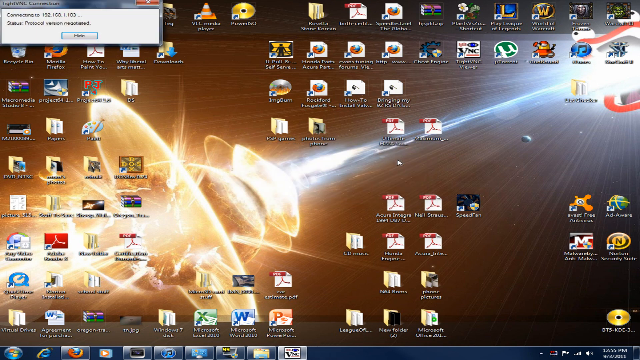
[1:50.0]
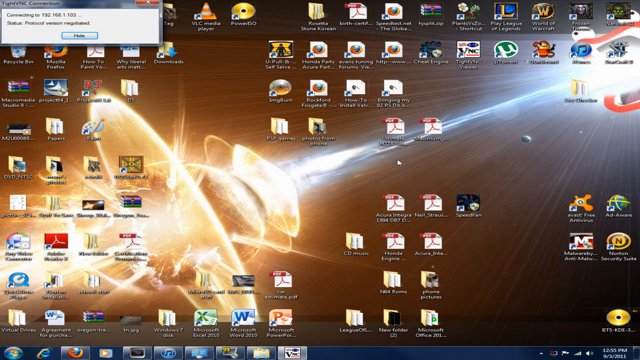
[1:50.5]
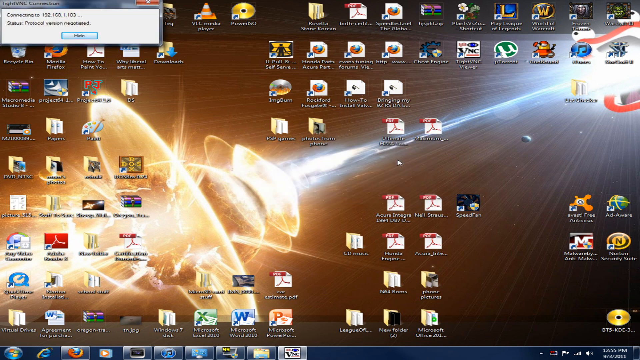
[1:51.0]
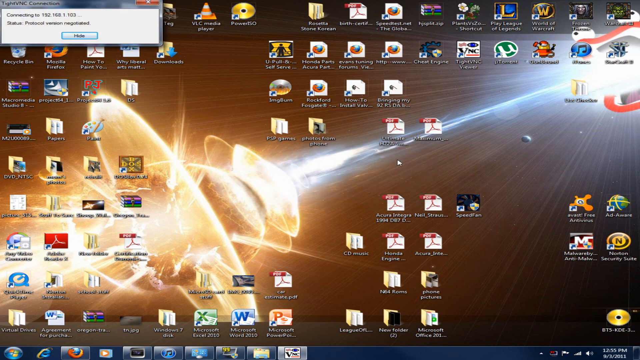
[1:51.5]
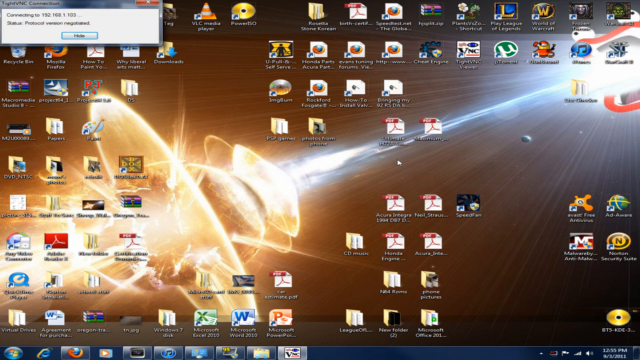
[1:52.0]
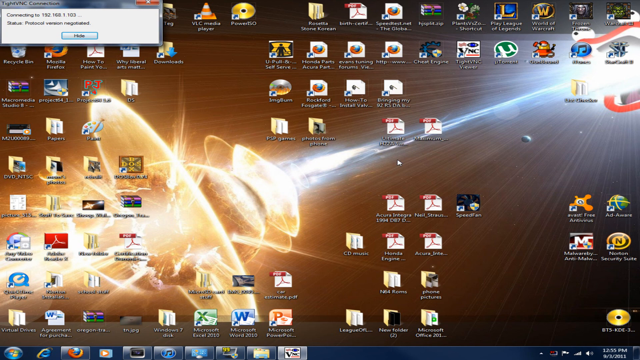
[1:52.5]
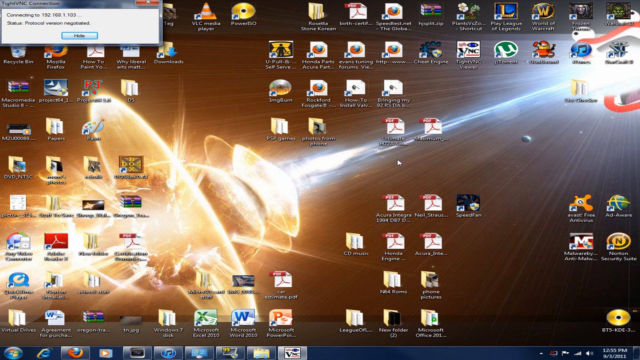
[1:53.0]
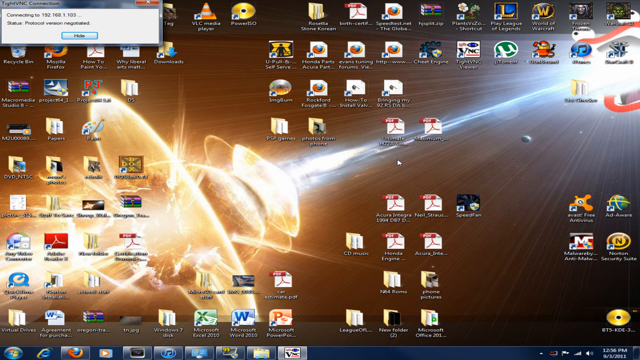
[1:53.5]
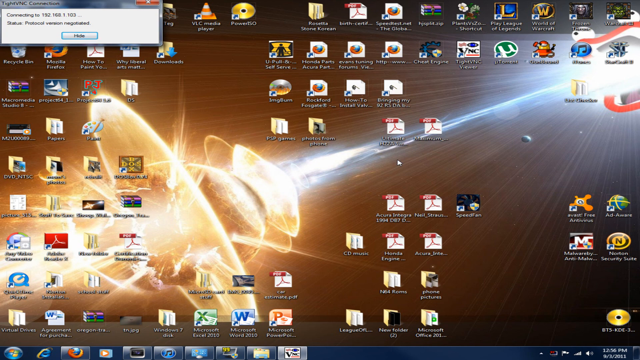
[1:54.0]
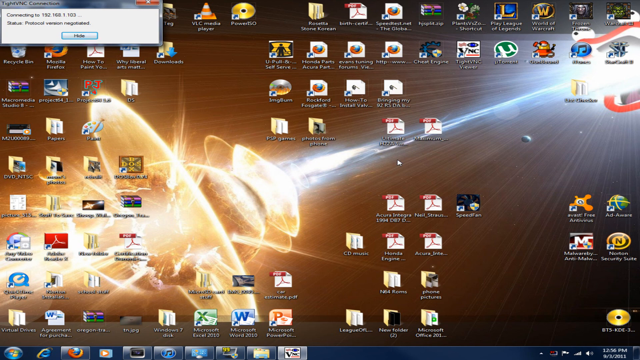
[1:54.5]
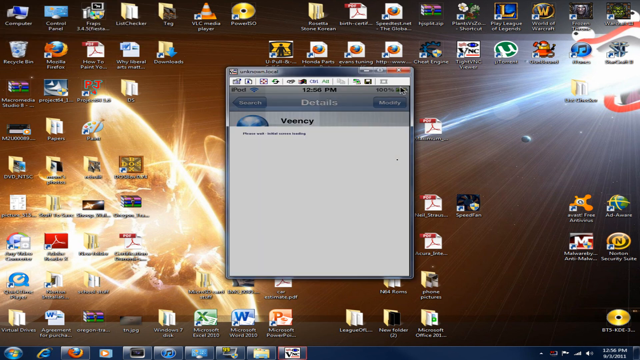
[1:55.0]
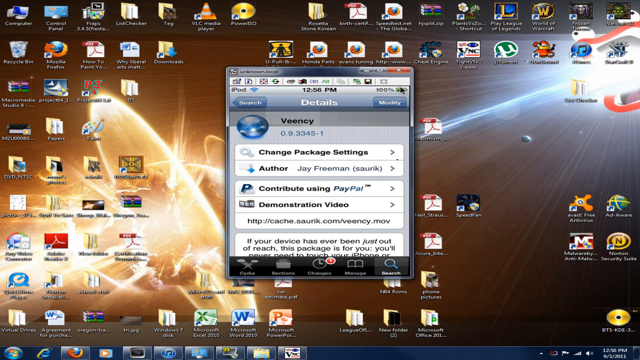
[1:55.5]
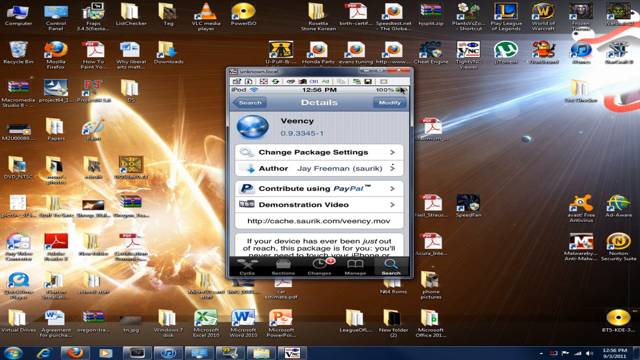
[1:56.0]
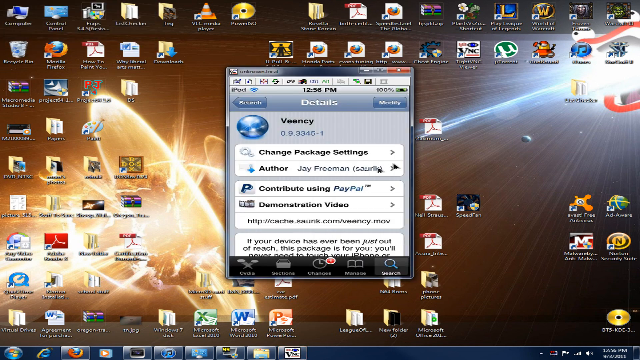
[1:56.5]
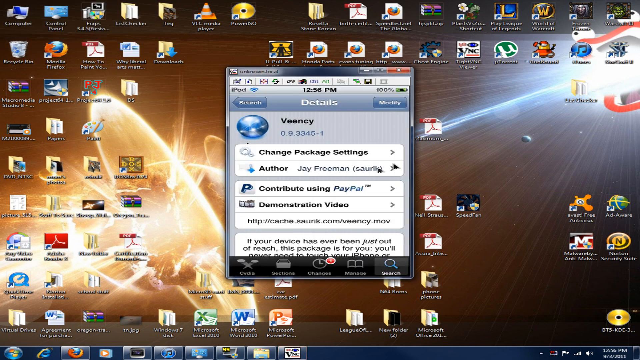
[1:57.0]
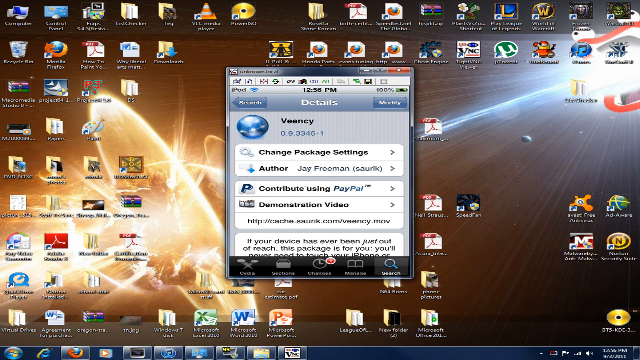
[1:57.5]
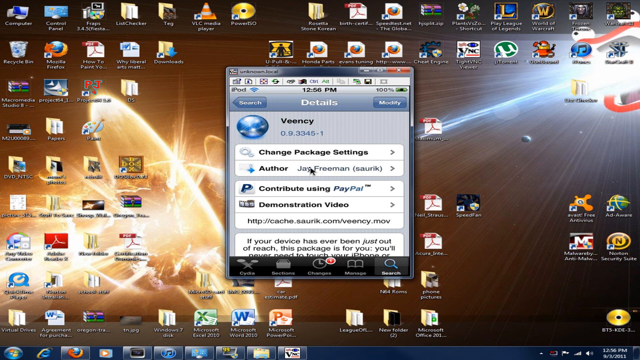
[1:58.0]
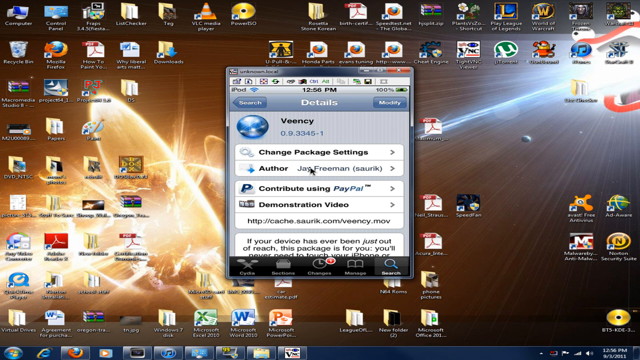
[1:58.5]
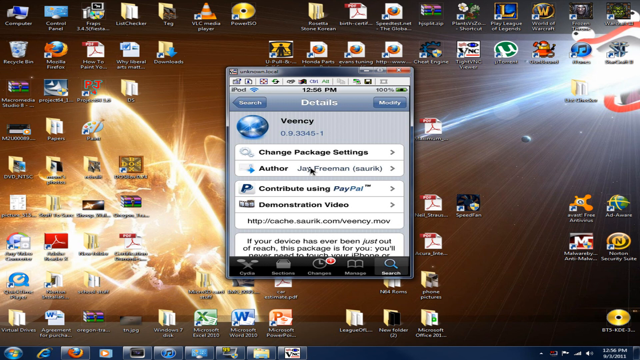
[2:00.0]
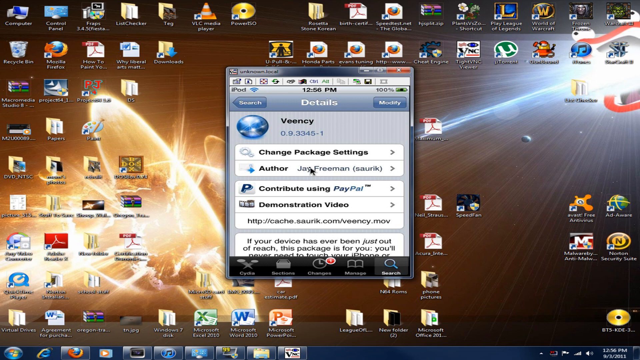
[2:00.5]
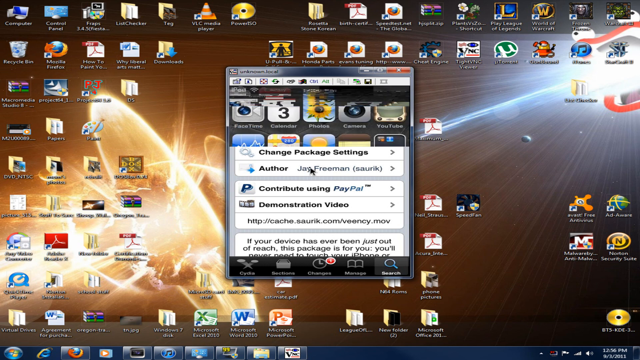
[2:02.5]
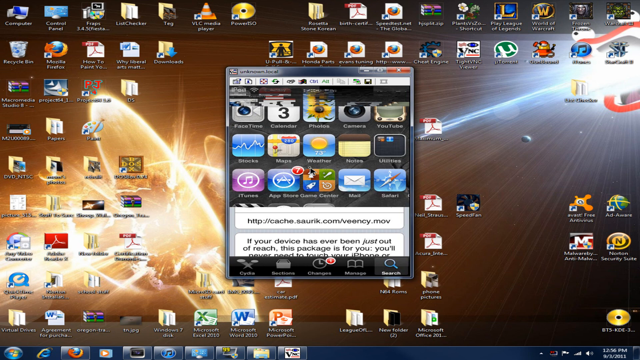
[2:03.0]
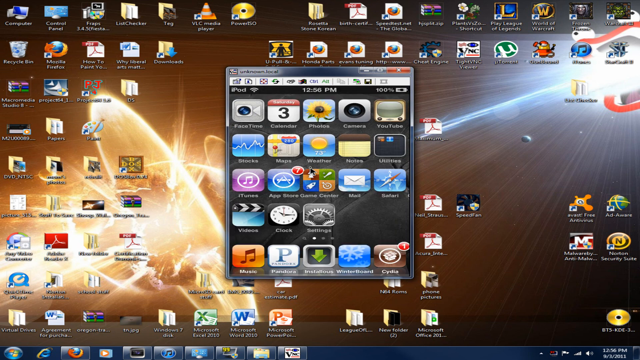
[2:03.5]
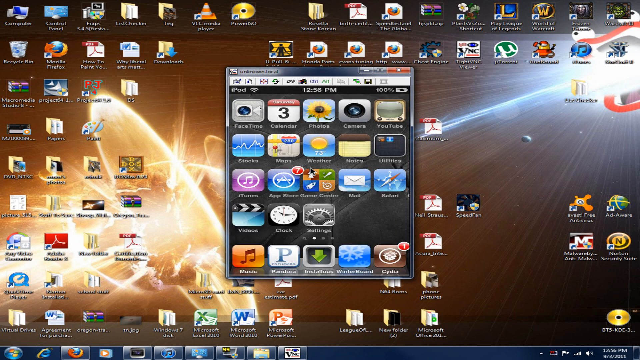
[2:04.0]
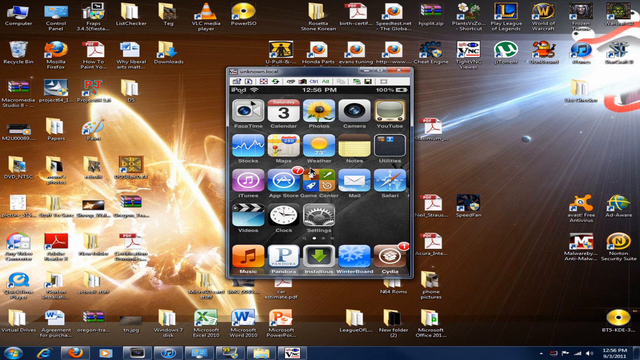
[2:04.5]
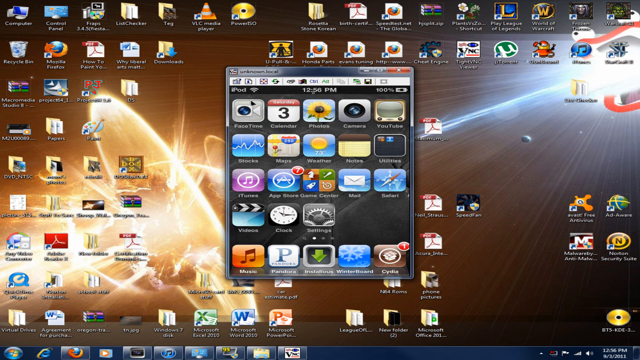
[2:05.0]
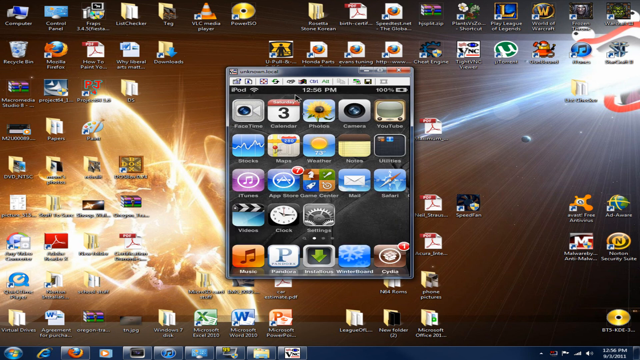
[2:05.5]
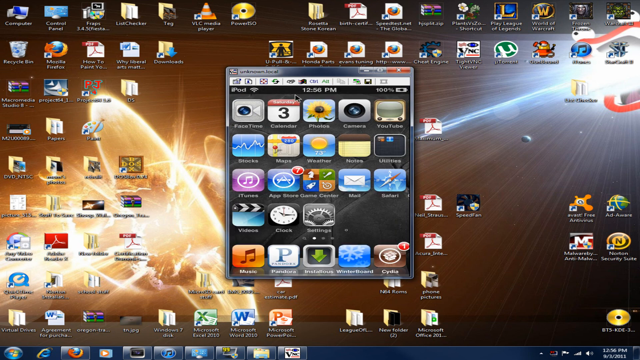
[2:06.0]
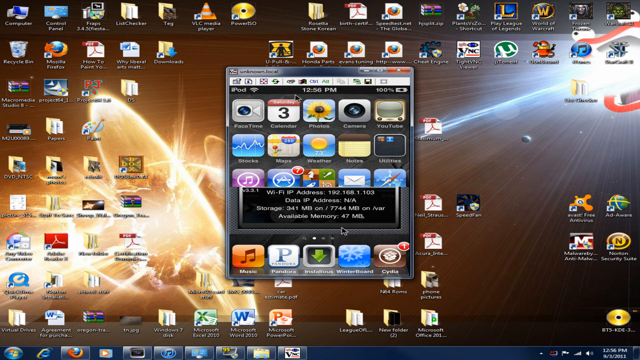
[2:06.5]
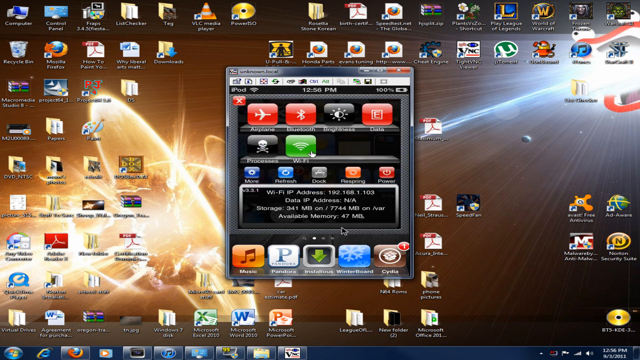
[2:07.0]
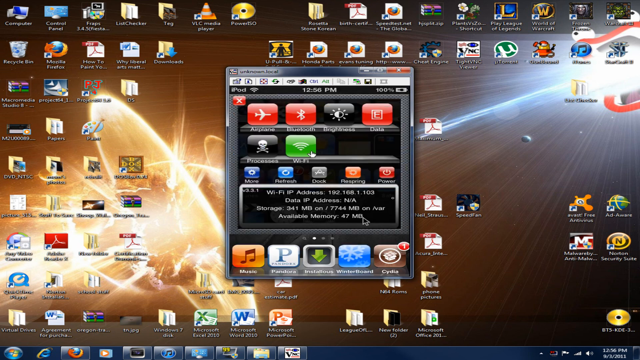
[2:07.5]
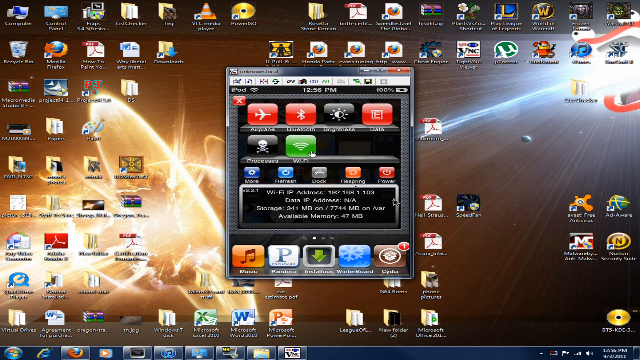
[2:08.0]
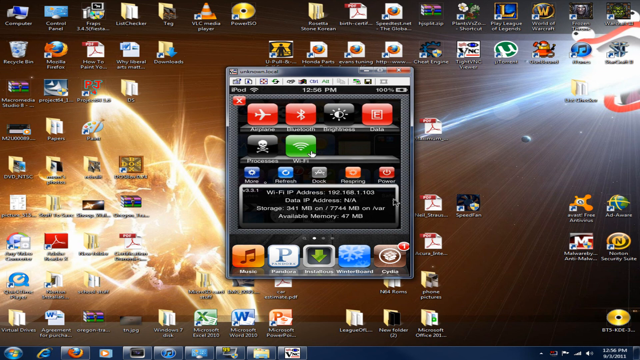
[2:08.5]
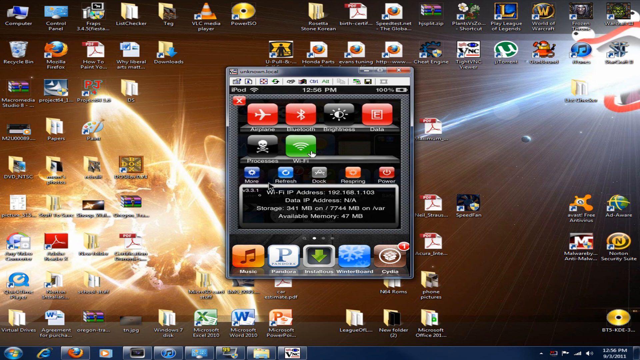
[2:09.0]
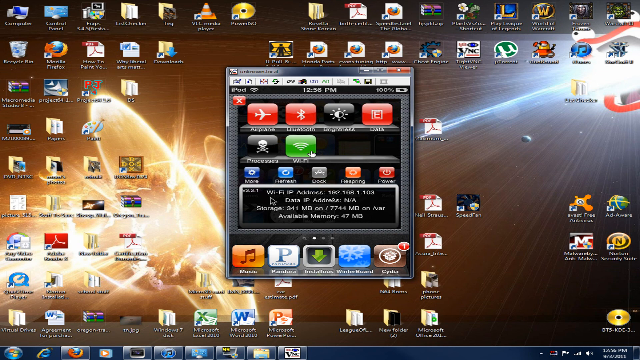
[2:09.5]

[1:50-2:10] A computer screen has an outer space wallpaper showing a planet colliding with another planet, with bright yellow light shining out from around them as if they are exploding. There are about 50 to 60 different icons on the screen. In the top left-hand corner is a small pop-up window; at its very top it says "type VNC Connection", underneath it says "Connecting", then "Status", and there is a small button that says "Hide". That window disappears and a new small window appears in the middle of the screen, saying "details" and "Veency", with four options underneath: "change package settings", "author", "contribute using PayPal" and "demonstration video". There are small black arrows to the right of each option.